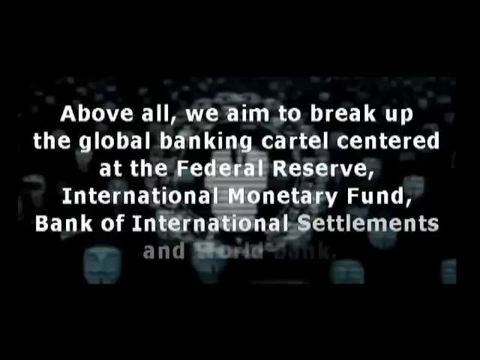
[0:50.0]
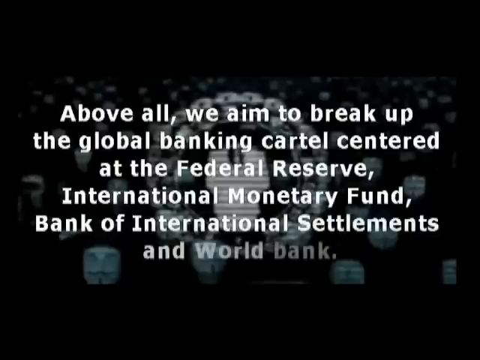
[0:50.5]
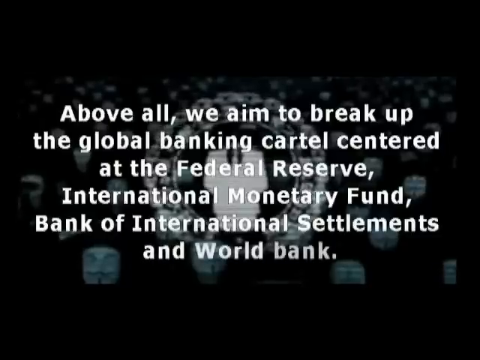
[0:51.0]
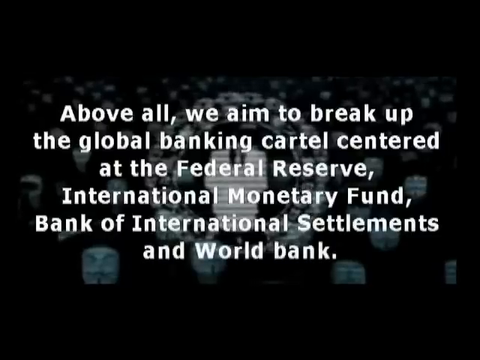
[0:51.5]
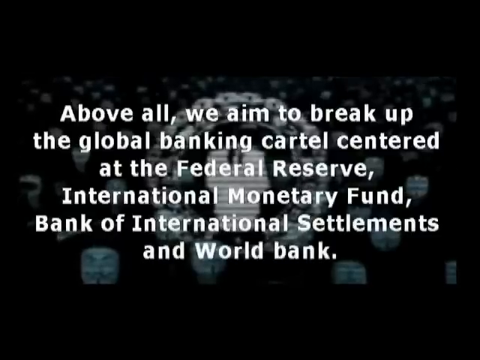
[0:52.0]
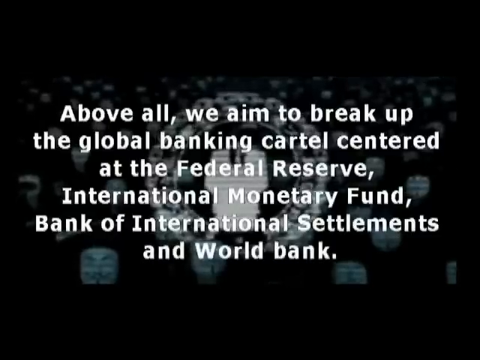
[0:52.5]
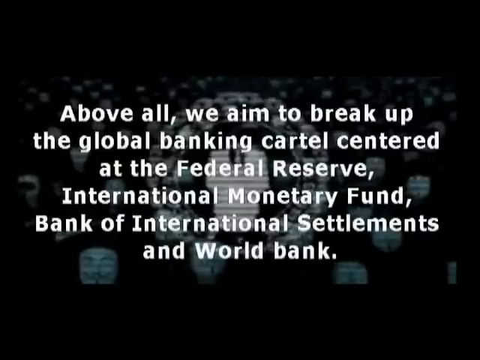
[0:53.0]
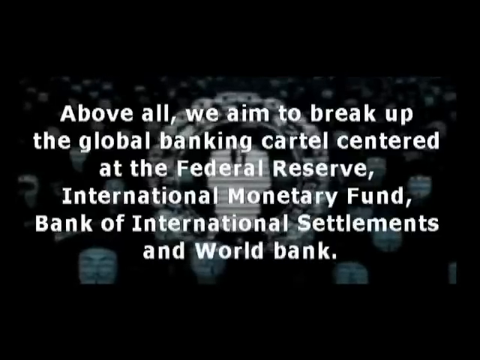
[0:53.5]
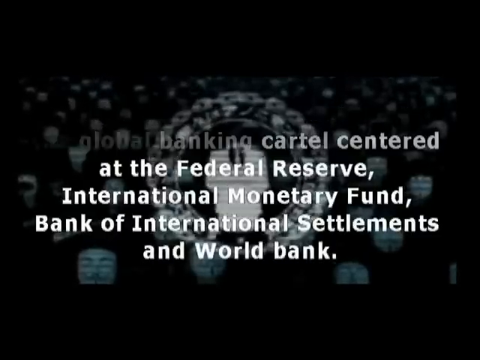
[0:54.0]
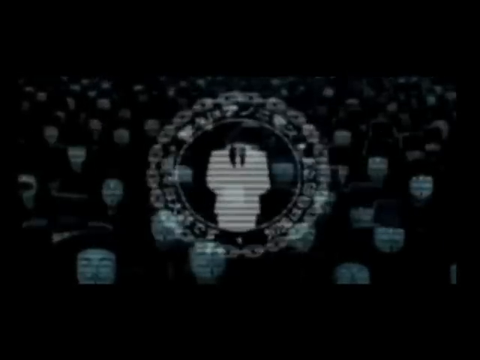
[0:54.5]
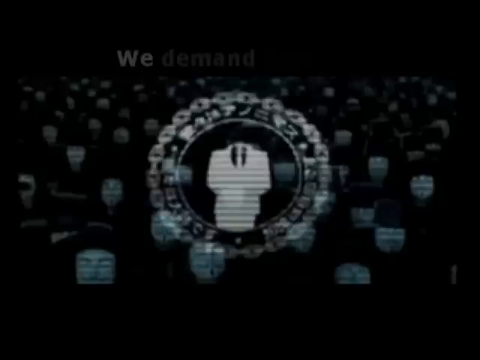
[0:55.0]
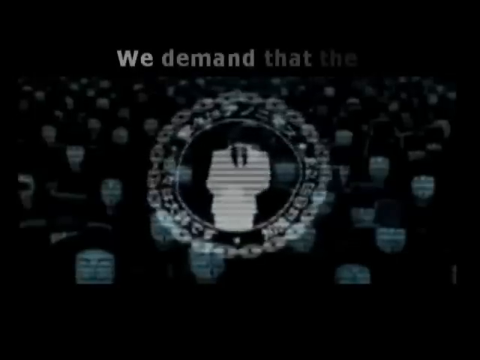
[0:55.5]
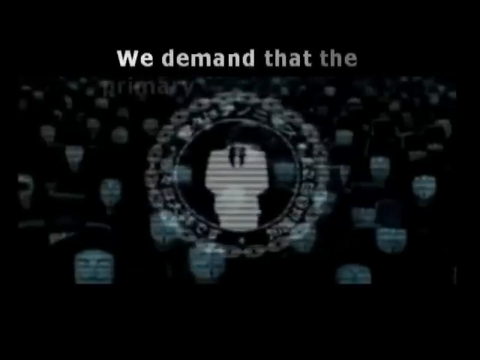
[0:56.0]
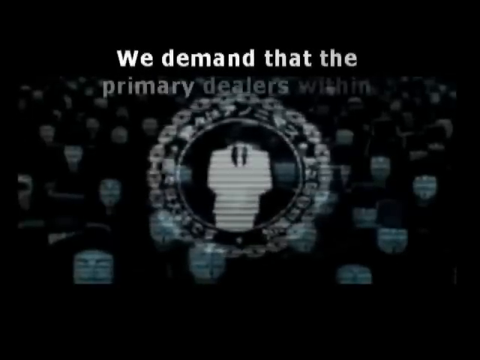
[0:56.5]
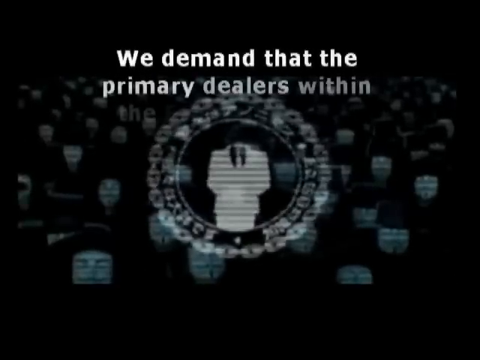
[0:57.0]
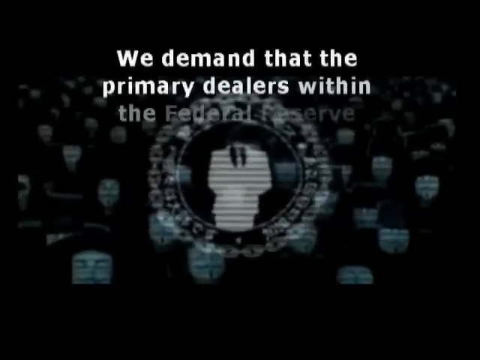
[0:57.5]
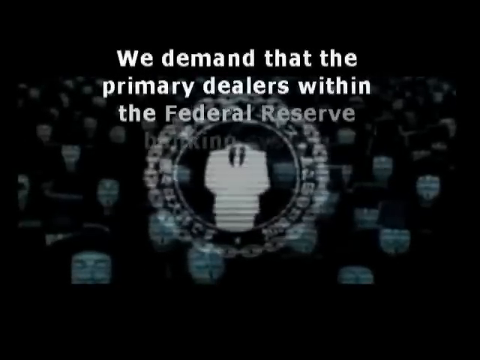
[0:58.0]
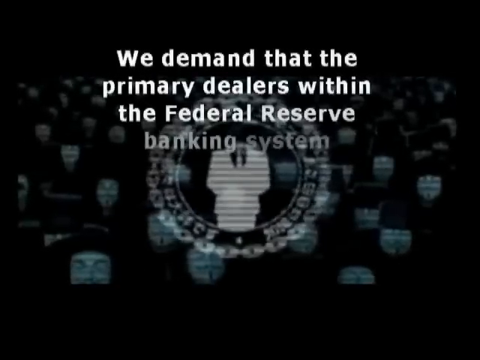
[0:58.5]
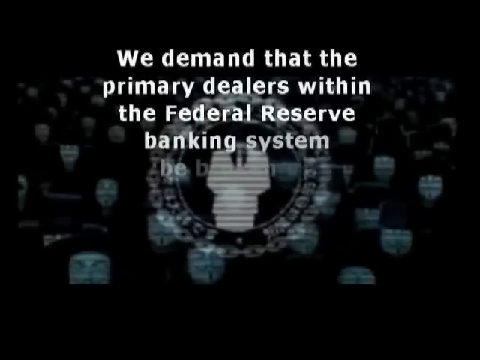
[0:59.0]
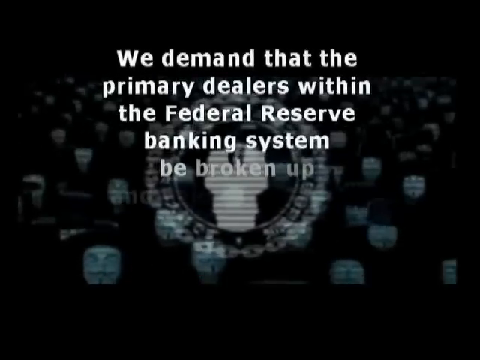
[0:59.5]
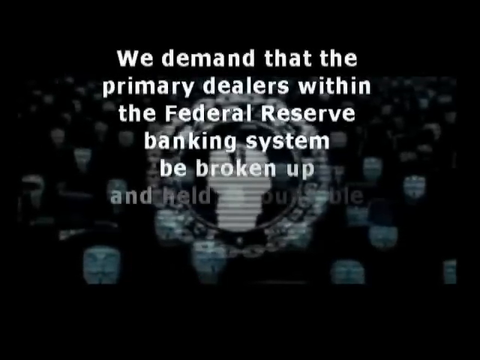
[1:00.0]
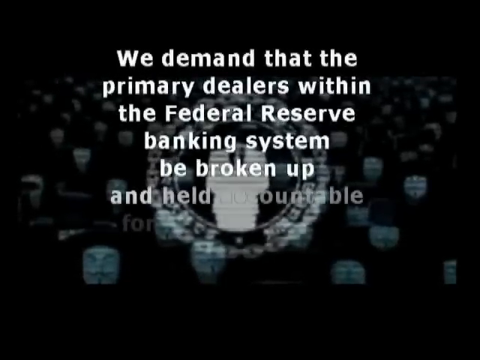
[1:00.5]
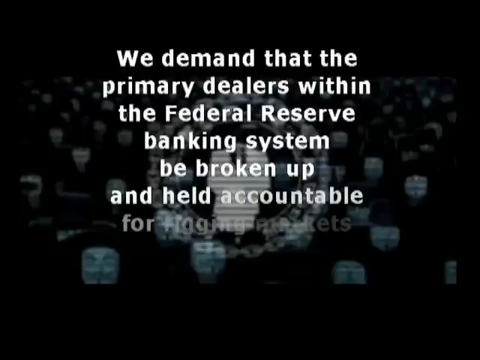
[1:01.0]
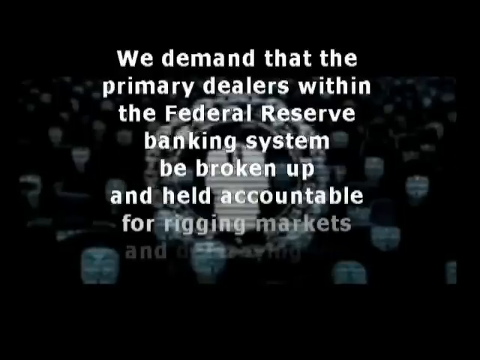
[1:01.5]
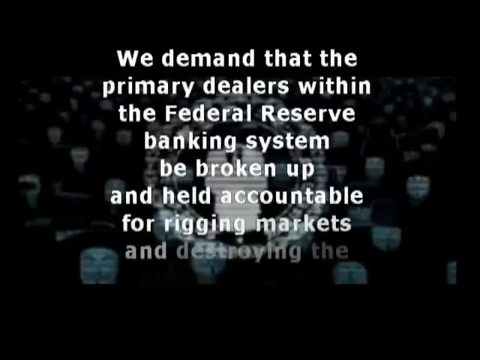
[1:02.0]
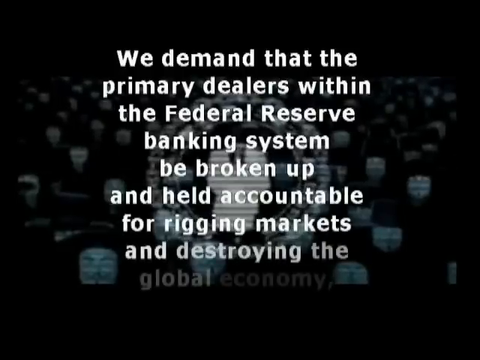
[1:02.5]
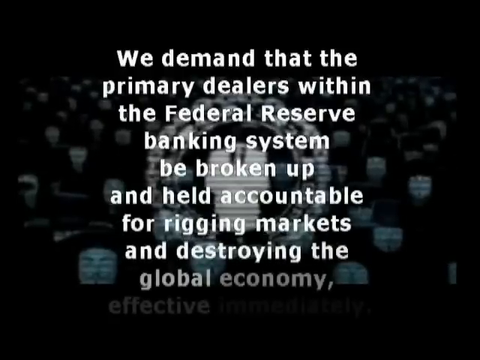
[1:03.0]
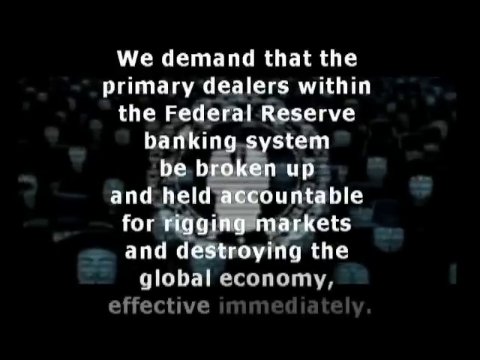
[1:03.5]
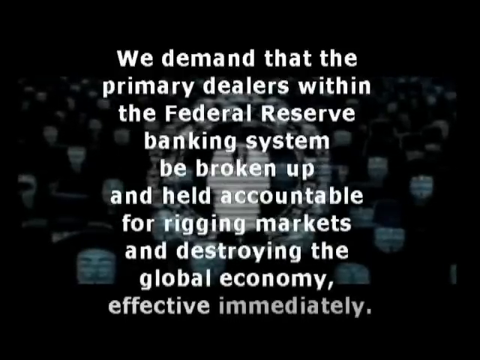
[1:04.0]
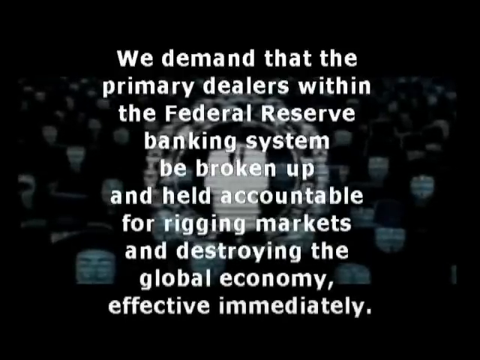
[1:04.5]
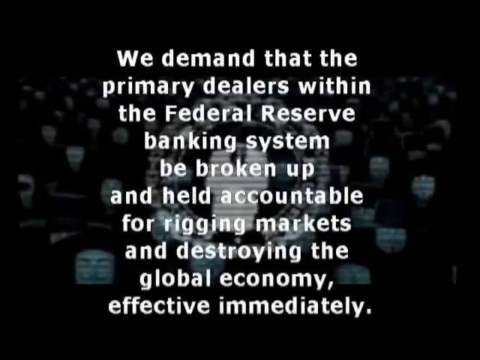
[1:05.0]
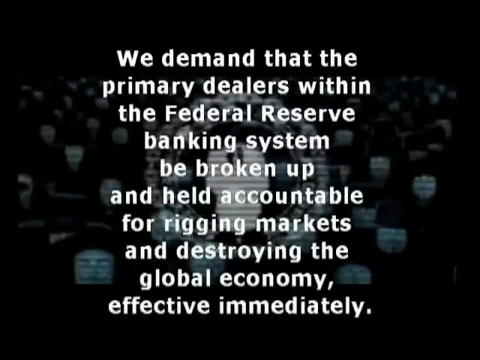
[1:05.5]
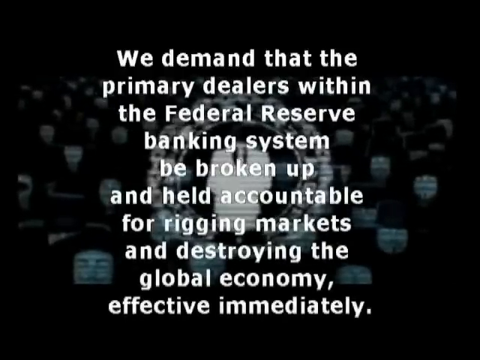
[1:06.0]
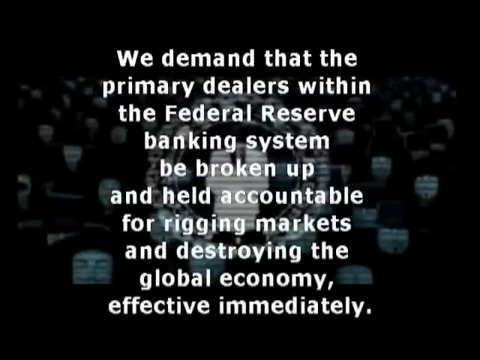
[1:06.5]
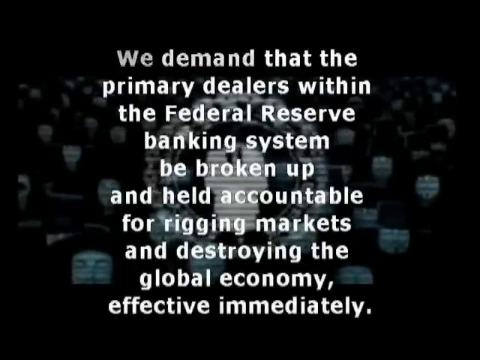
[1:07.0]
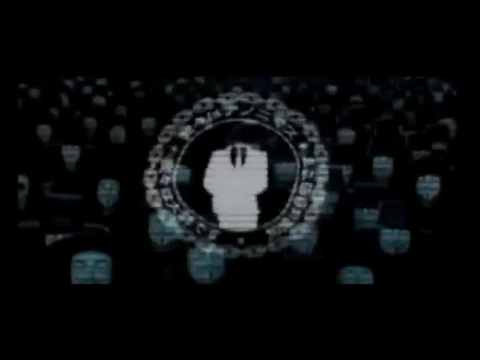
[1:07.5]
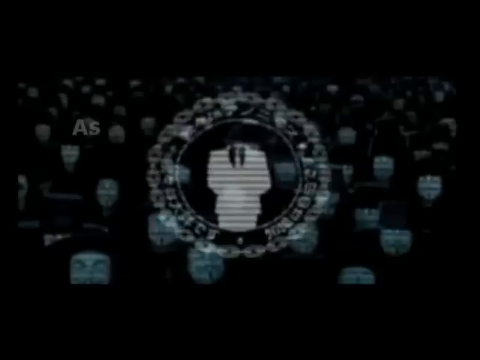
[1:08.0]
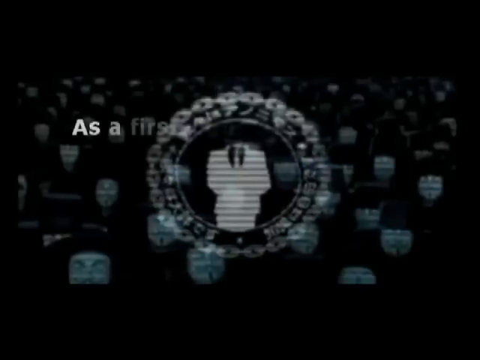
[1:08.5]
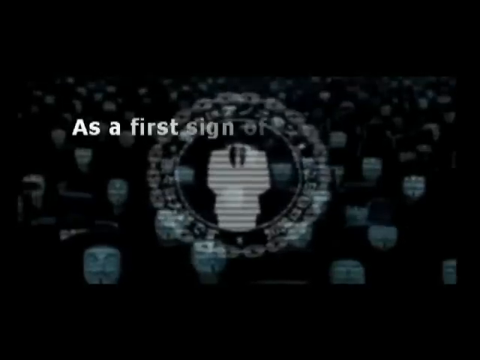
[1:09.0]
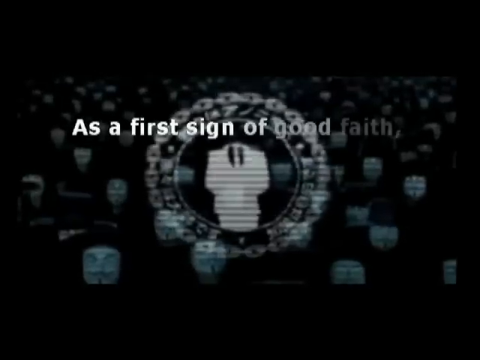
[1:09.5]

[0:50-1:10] A black background shows many figures wearing white masks and a circular logo with something inside it that looks like a person wearing a white suit. In front, white text slowly appears, reading: "Above all, we aim to break up the global banking cartel centred in the Federal Reserve, International Monetary Fund, Bank of International Settlements and World Bank". After a while this text disappears and another block appears in its place: "We demand that the primary dealers within the Federal Reserve Banking System, be broken up and held accountable for rigging markets and destroying the global economy, effective immediately". The text appears slowly, word after word, and once fully shown it remains on screen for a few seconds so it can be easily read. At the end, the text disappears again and another sentence starts appearing, "As a first sign of good faith...", stopping in the middle of the sentence.